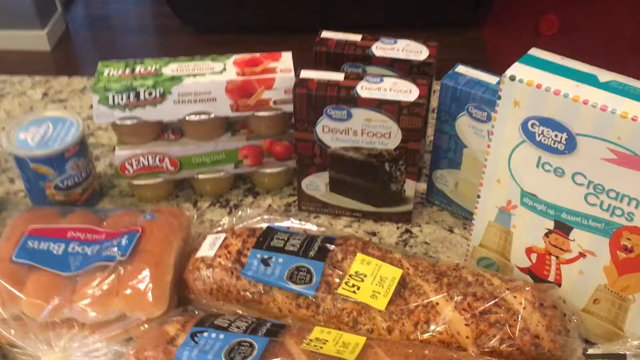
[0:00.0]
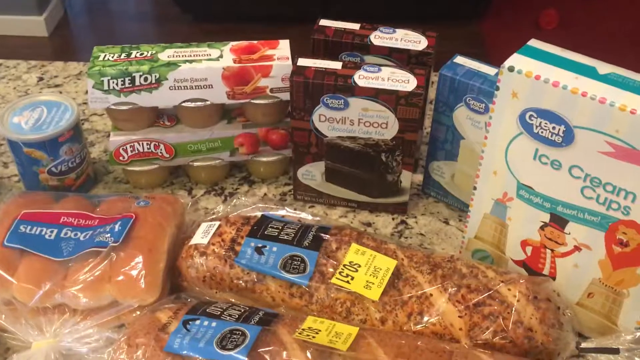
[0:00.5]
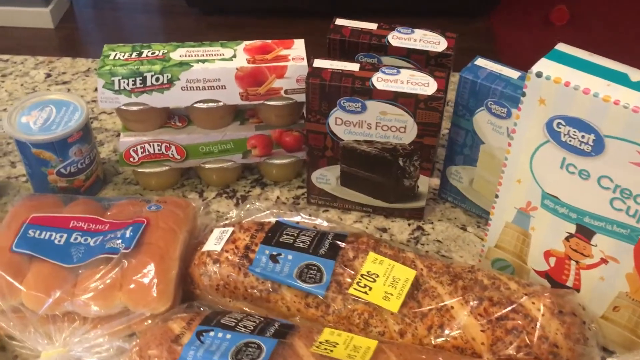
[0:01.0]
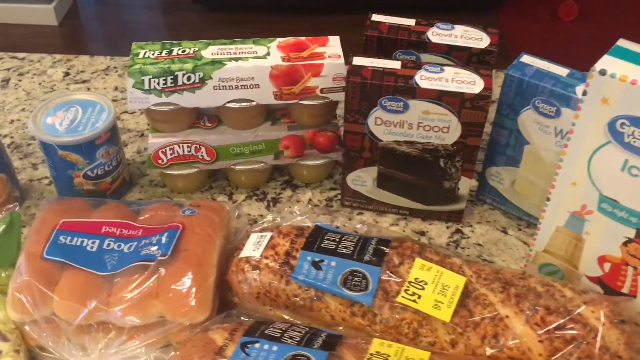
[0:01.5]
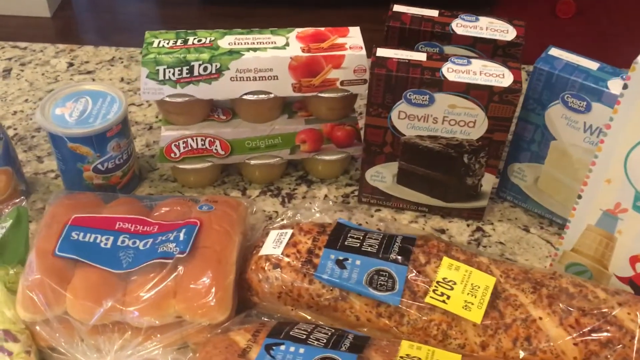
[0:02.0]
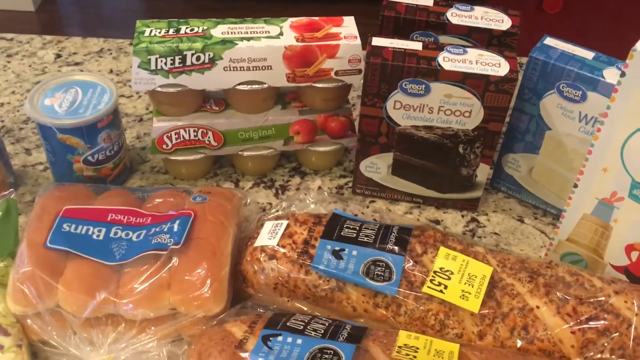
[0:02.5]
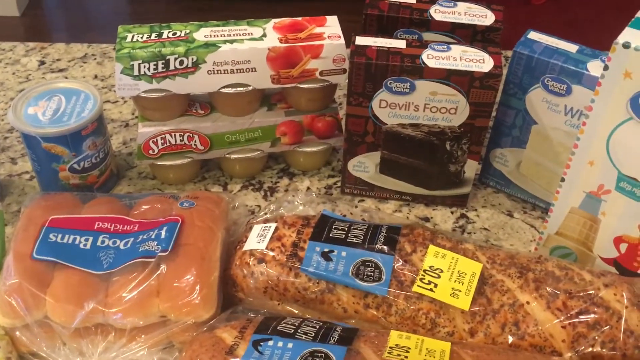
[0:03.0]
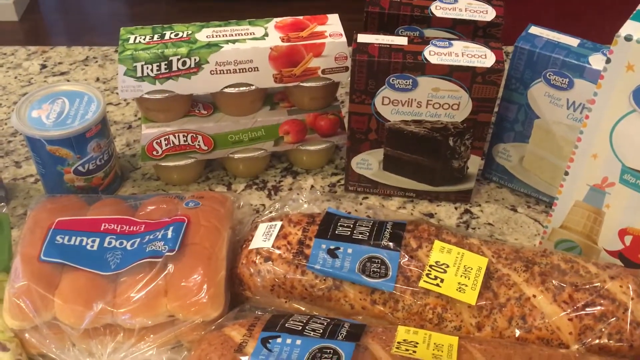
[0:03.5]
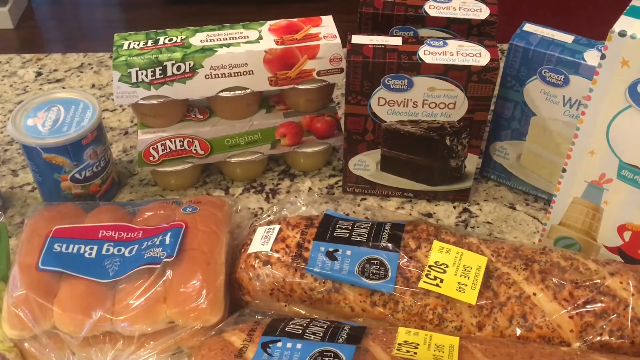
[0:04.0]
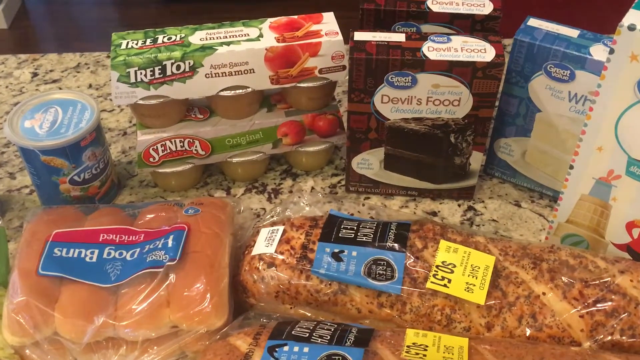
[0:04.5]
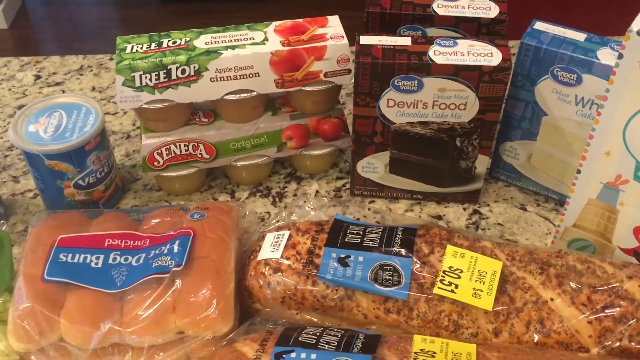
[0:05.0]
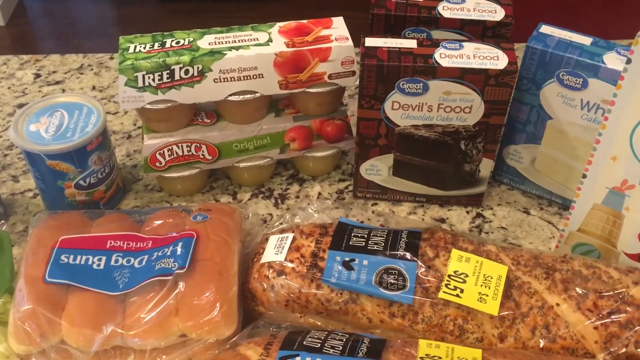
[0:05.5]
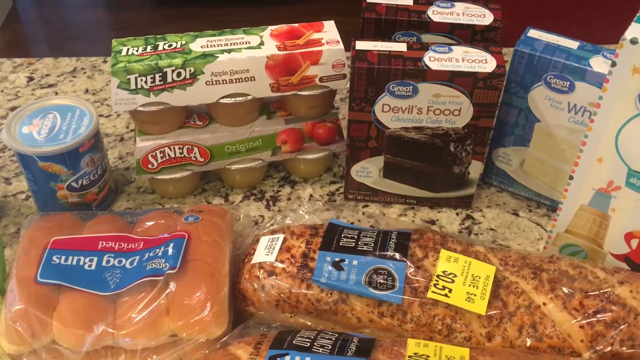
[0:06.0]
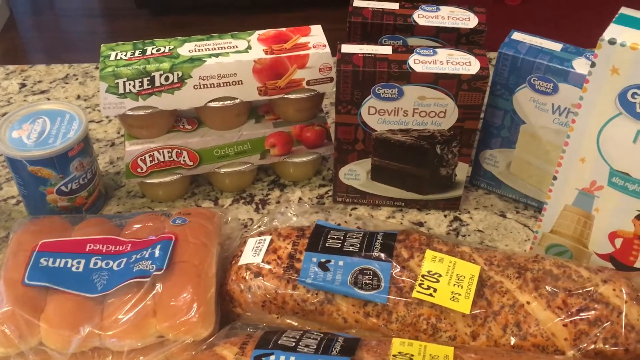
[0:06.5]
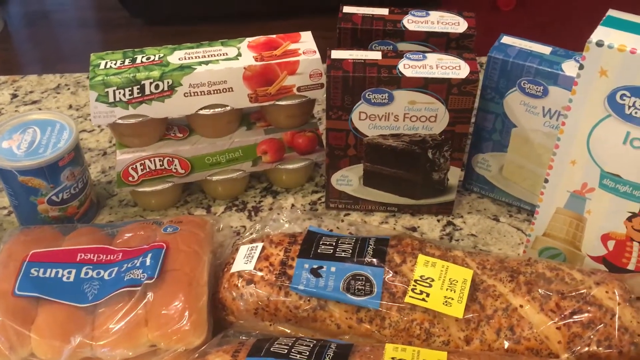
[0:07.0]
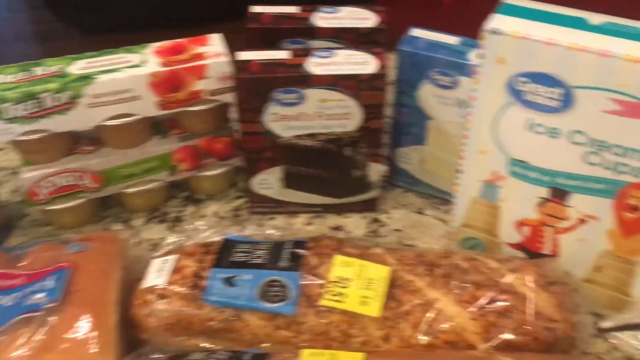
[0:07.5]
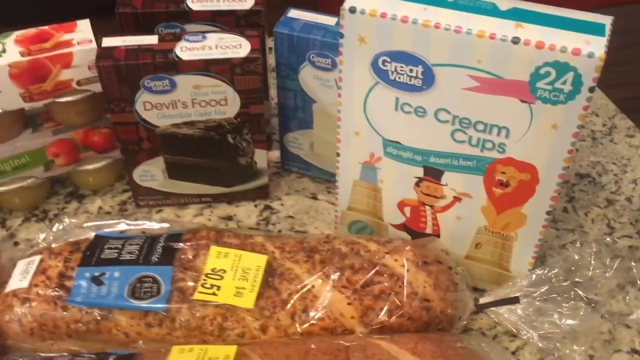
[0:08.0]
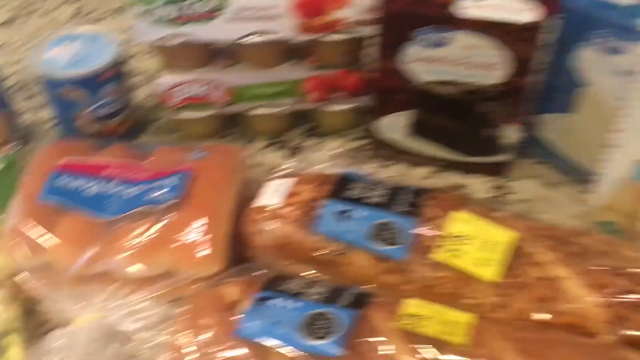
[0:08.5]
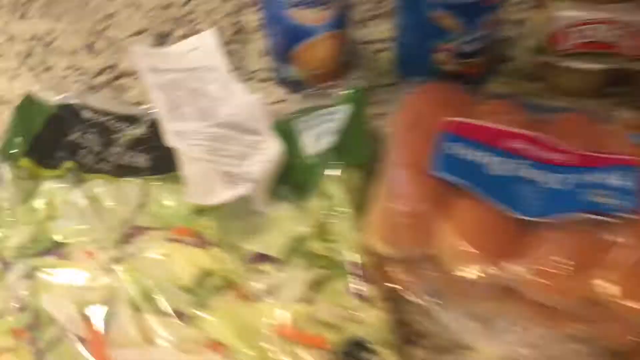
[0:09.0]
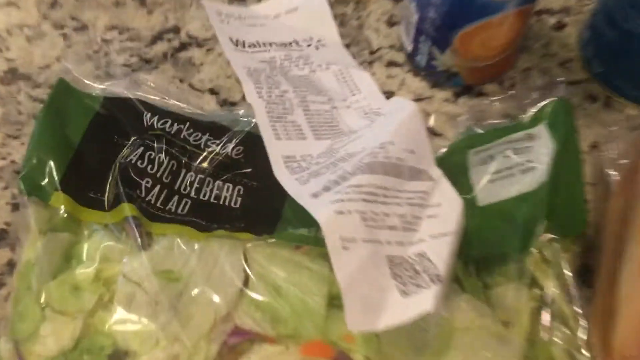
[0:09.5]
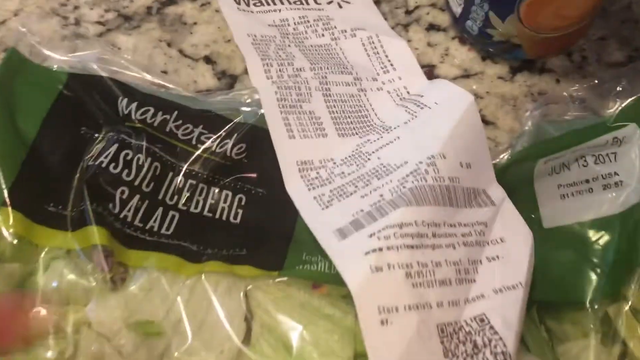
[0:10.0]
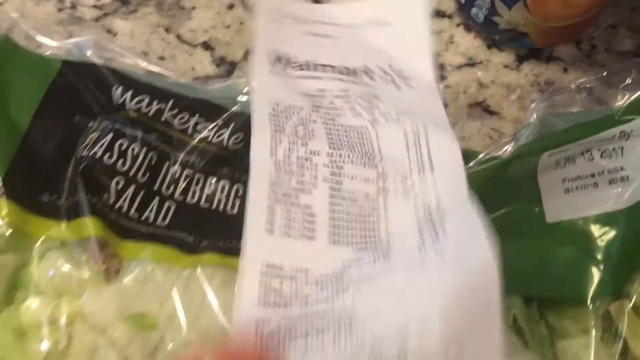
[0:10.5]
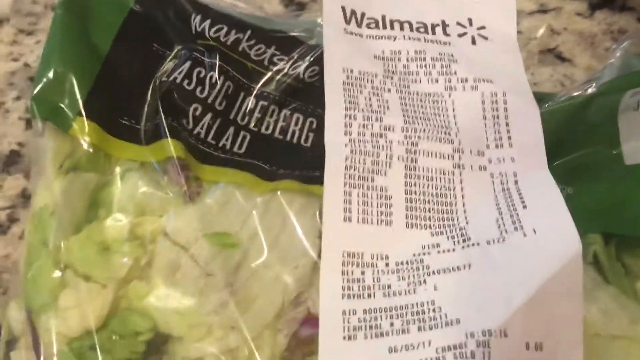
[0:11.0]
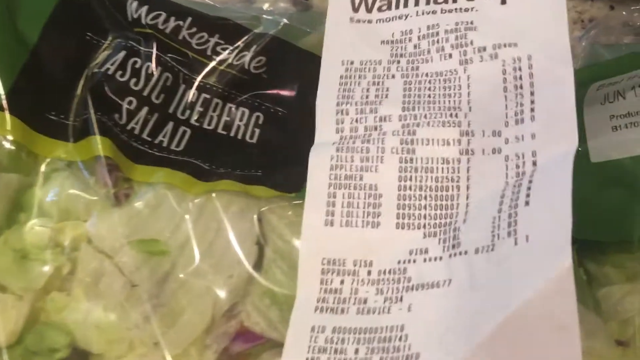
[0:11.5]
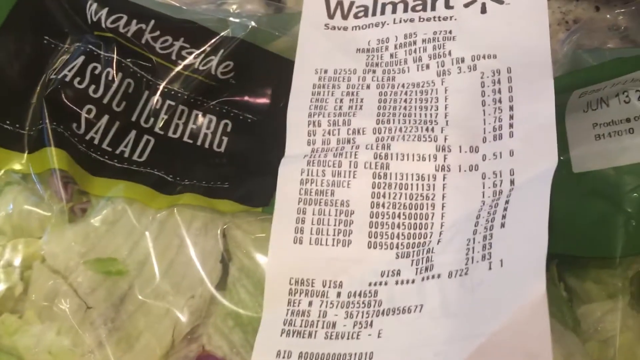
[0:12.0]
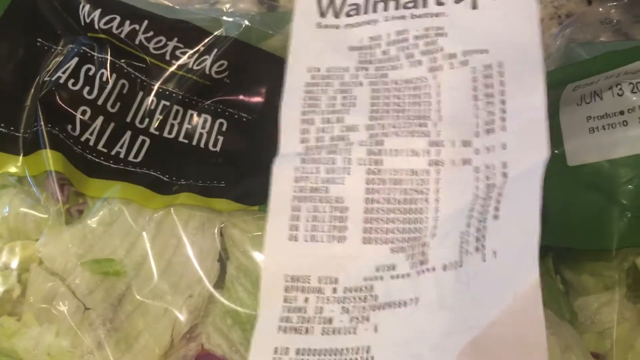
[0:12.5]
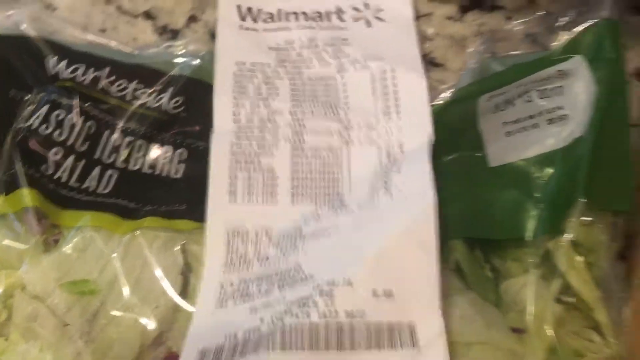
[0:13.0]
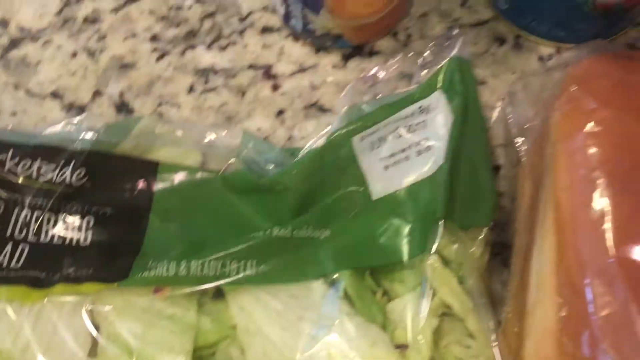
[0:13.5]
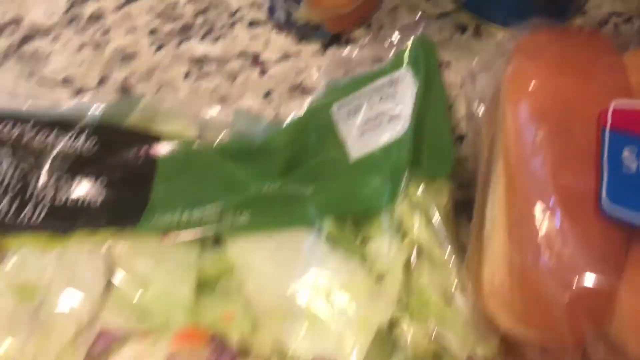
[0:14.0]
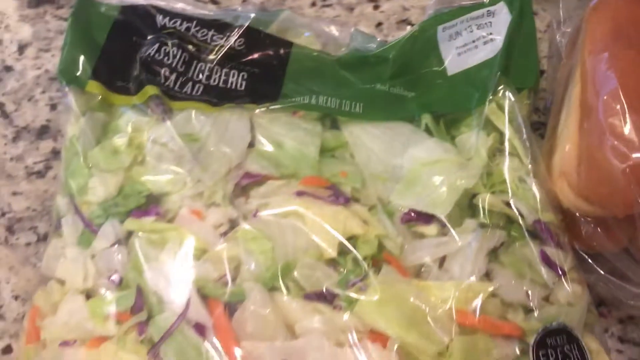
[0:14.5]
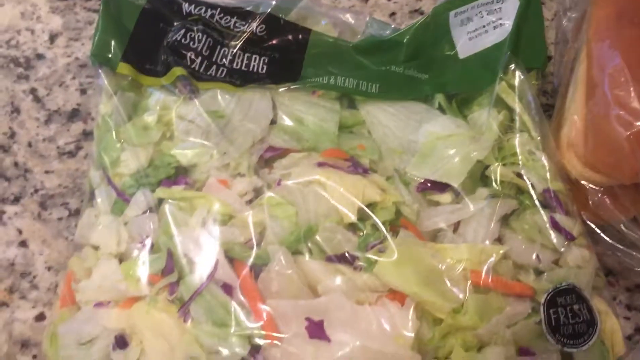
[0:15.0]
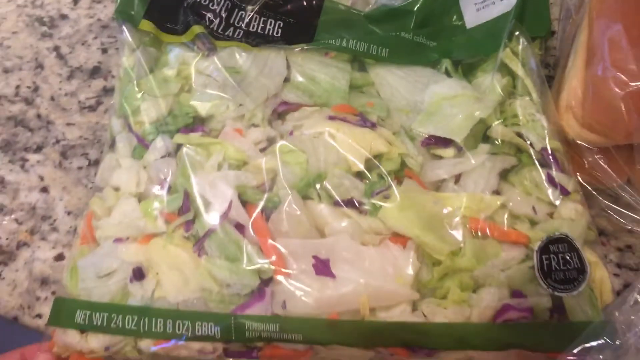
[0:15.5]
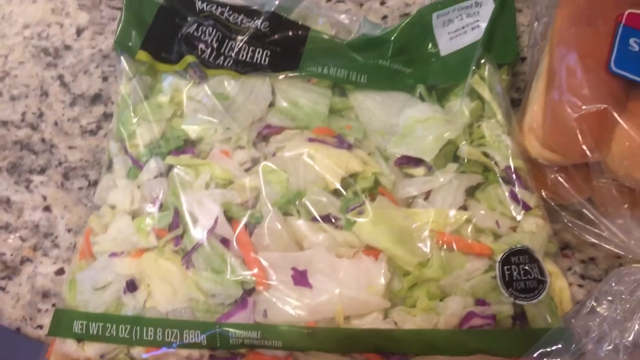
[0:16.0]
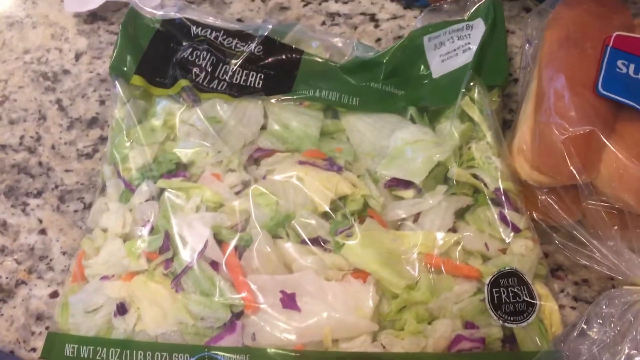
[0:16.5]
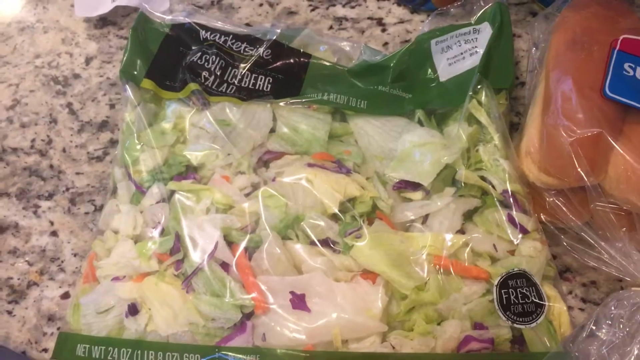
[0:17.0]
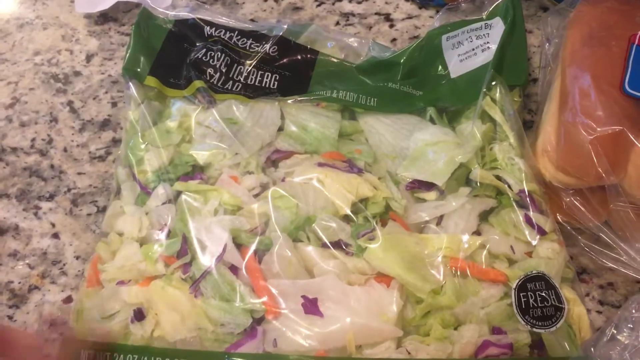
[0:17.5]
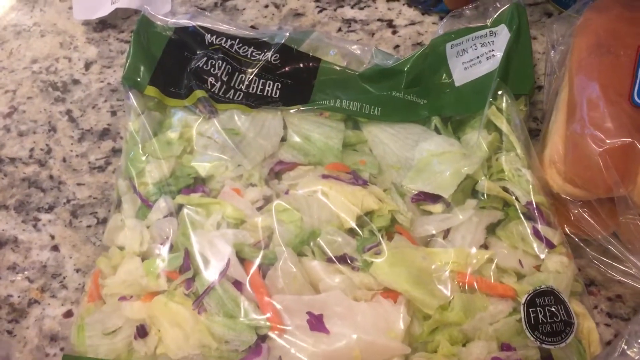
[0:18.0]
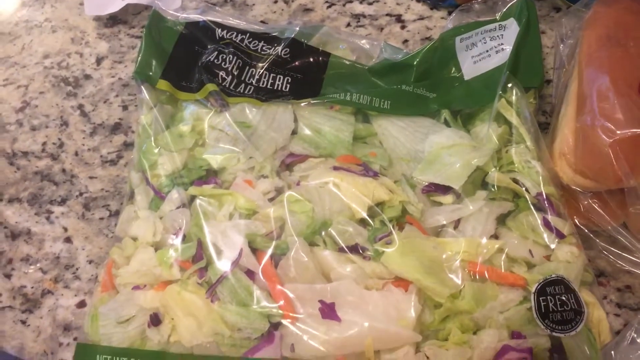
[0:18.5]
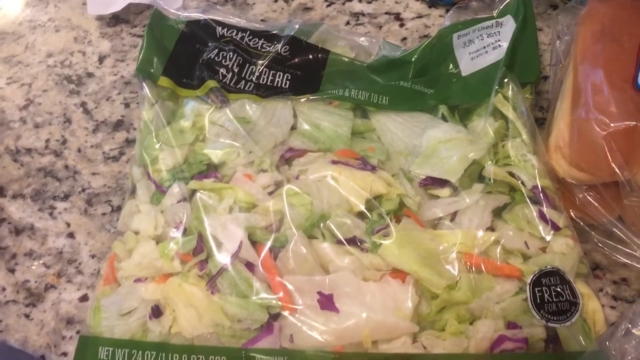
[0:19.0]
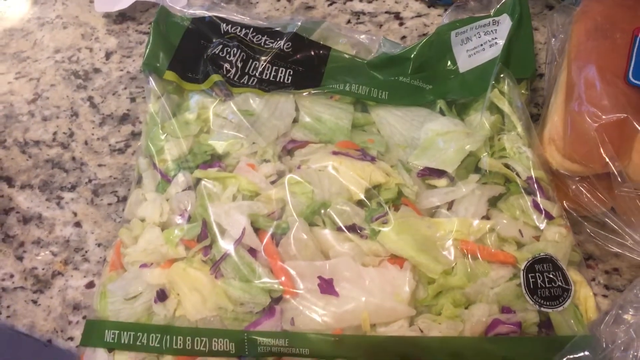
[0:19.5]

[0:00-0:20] What appear to be several food items are on a marble countertop in a kitchen. The grocery list of the items is shown, and the items were bought from Walmart. Among them are a salad, a classic iceberg salad, and two red boxes of devil's food; on the box there appears to be a chocolate cake. In front of the boxes are two long loaves of bread. To the left is applesauce, and to the right is a box of ice cream cups or cones. There is also a pack of 4 hot dog buns and a blue box of a vanilla cake recipe.